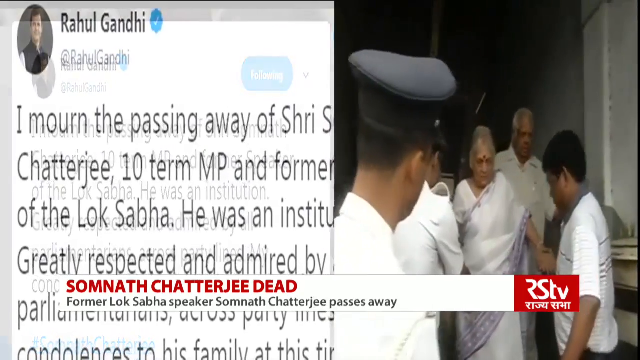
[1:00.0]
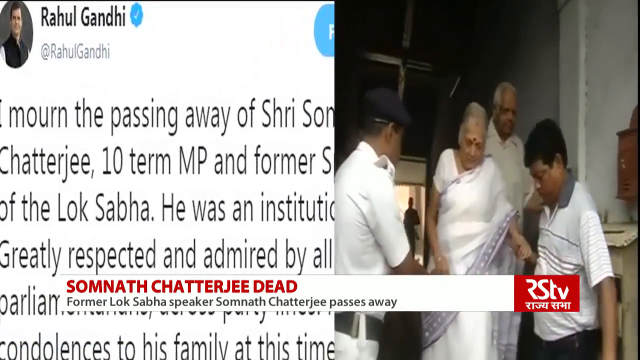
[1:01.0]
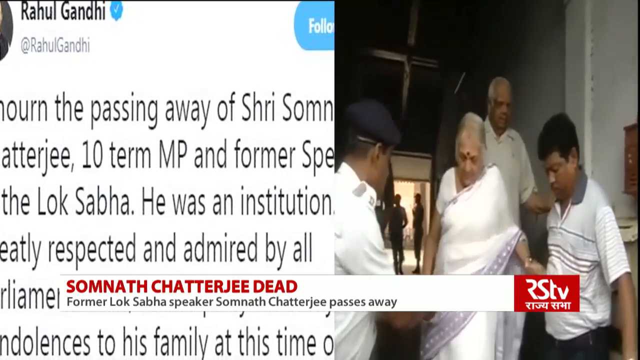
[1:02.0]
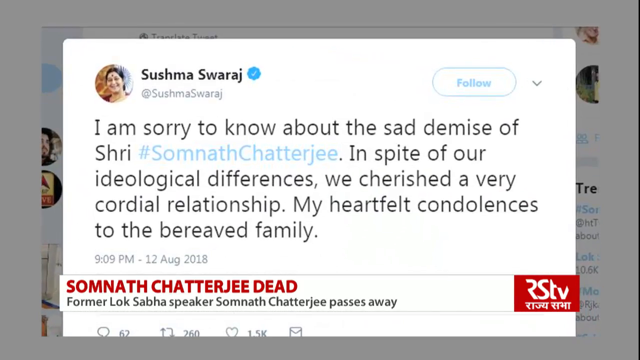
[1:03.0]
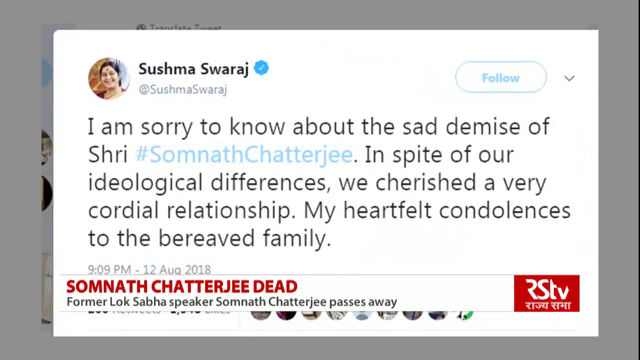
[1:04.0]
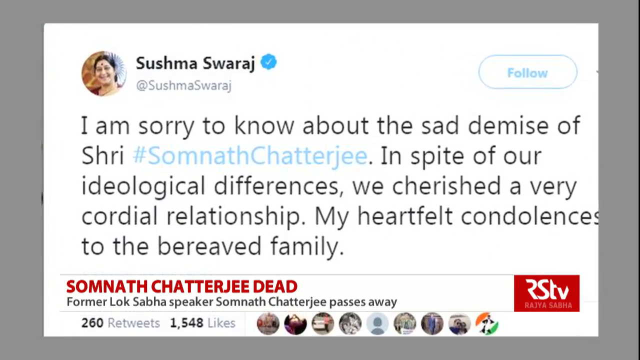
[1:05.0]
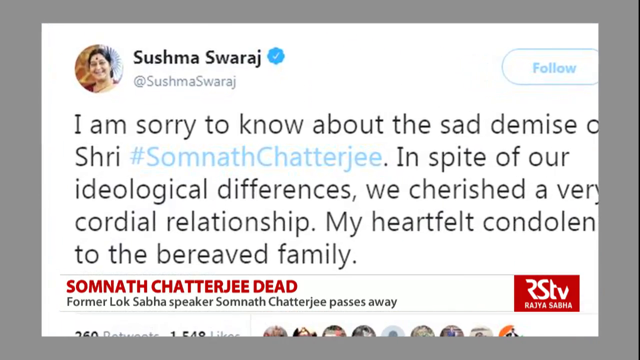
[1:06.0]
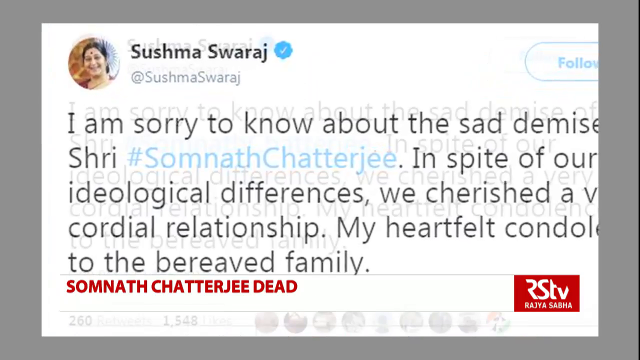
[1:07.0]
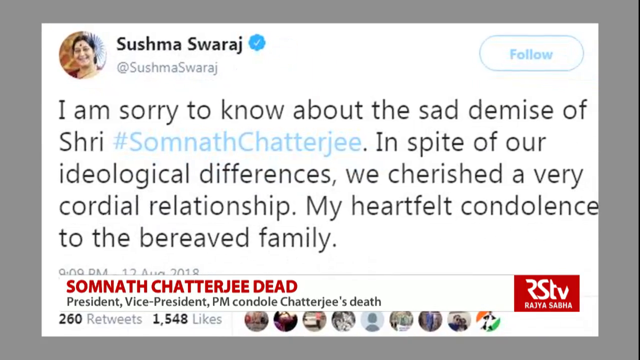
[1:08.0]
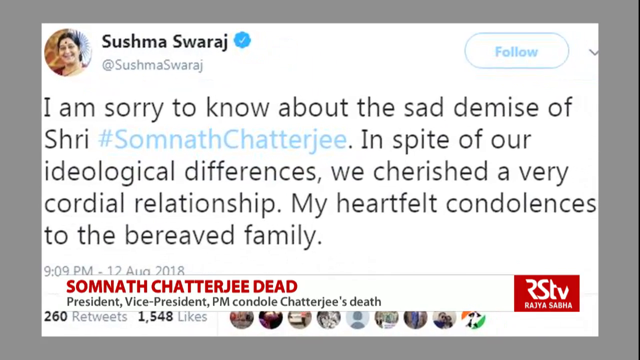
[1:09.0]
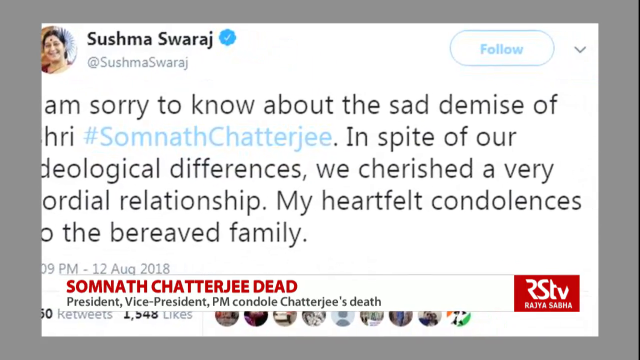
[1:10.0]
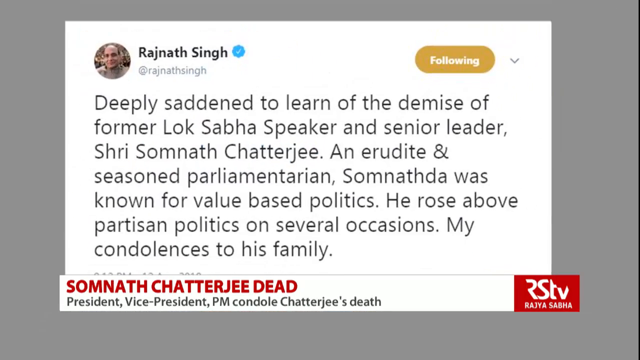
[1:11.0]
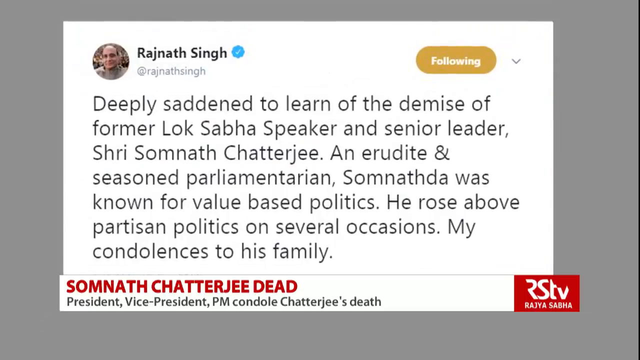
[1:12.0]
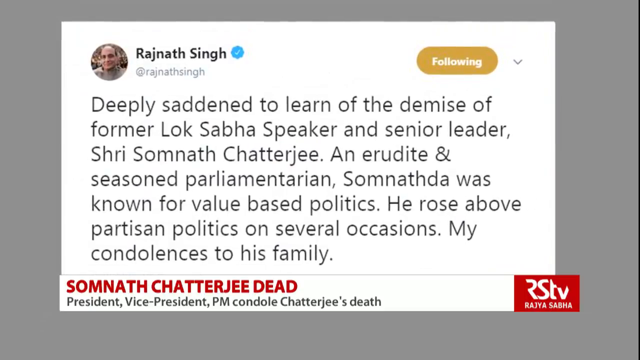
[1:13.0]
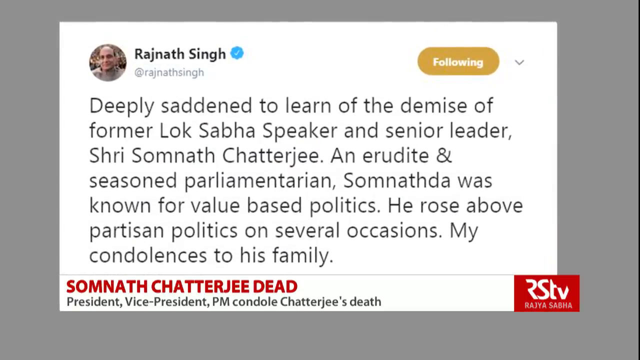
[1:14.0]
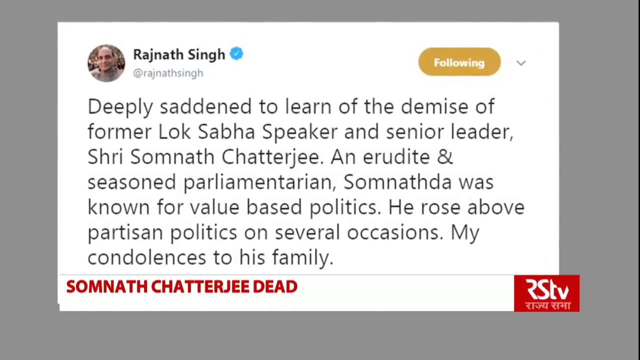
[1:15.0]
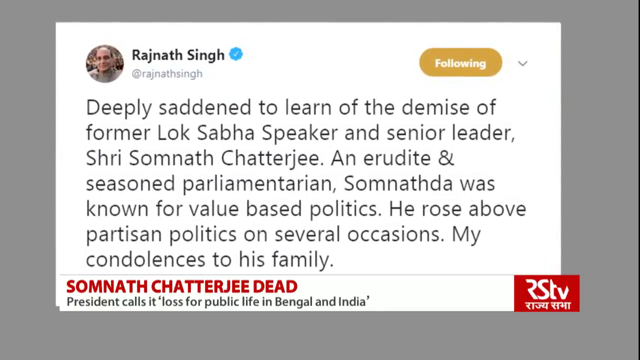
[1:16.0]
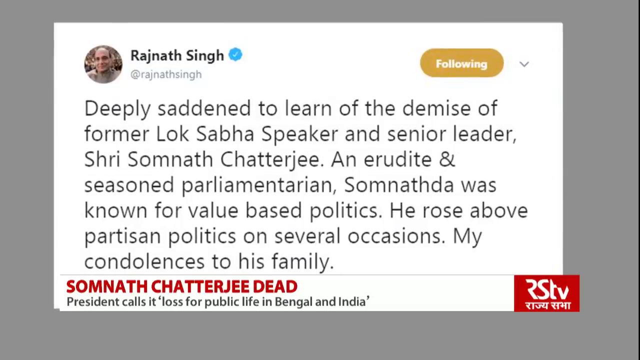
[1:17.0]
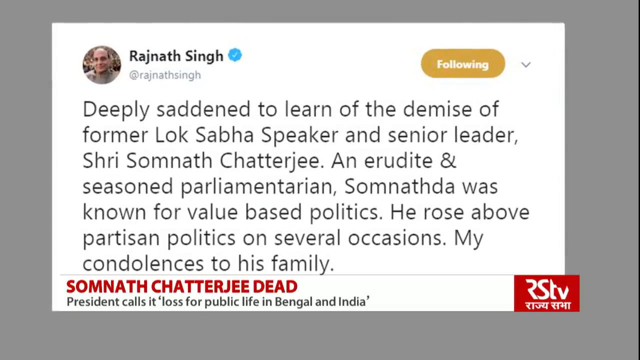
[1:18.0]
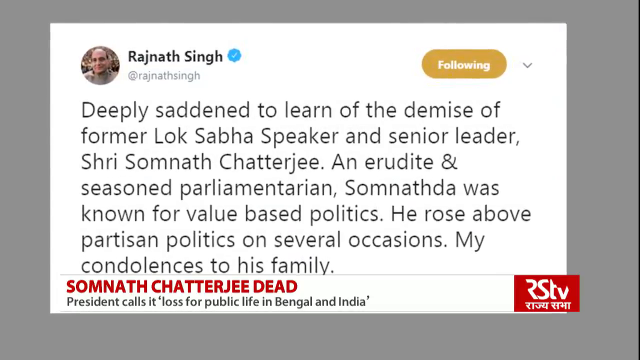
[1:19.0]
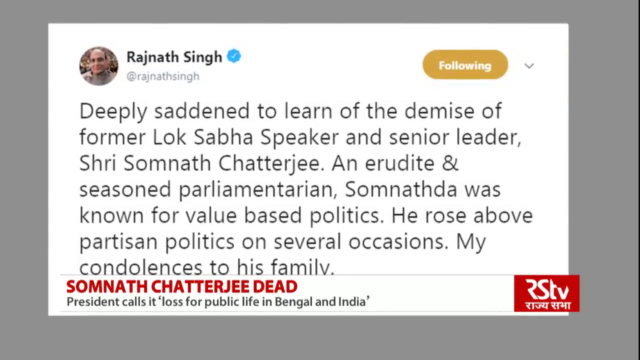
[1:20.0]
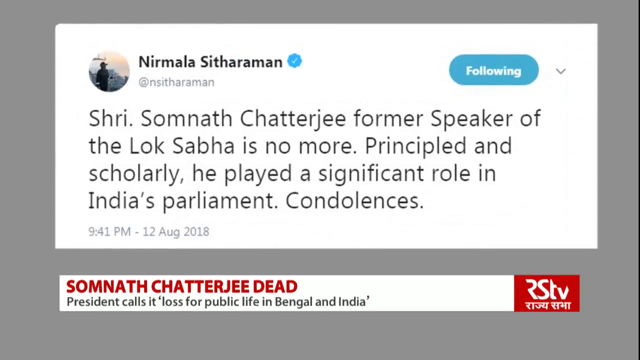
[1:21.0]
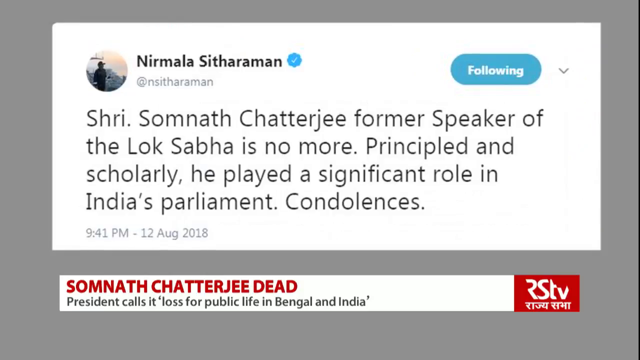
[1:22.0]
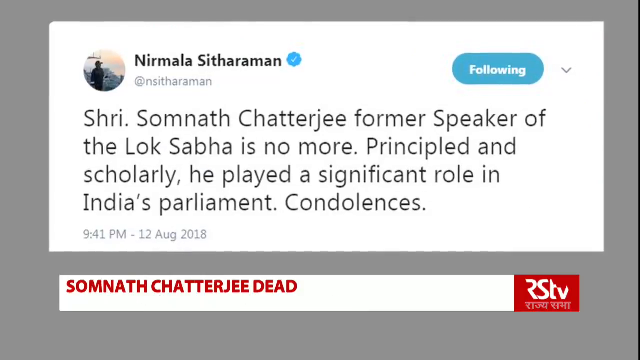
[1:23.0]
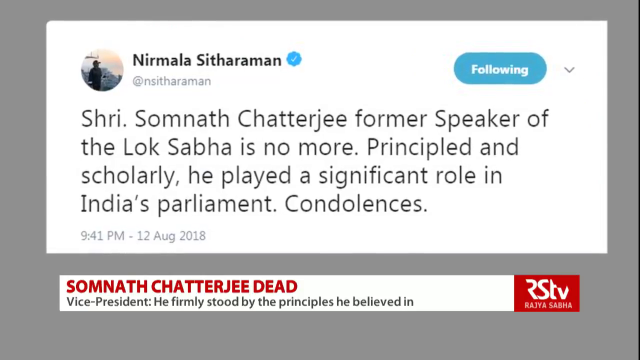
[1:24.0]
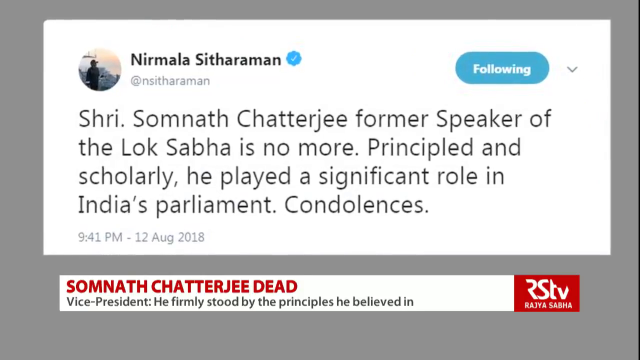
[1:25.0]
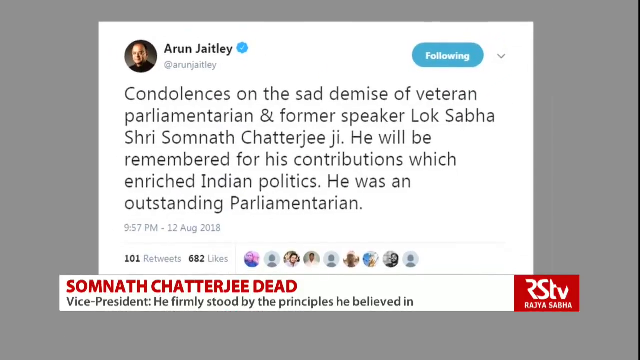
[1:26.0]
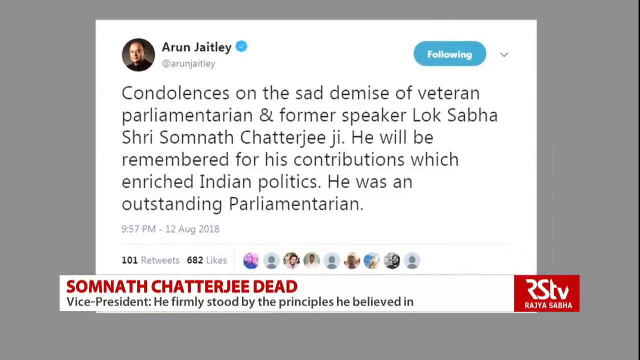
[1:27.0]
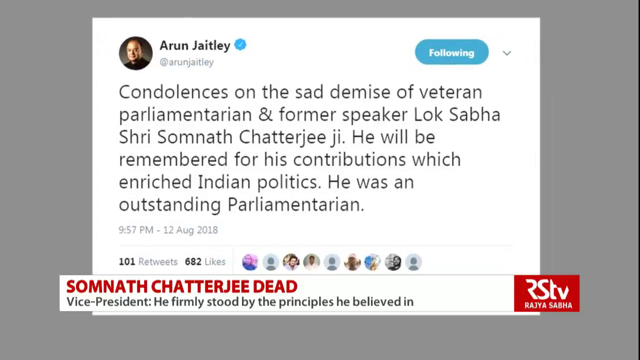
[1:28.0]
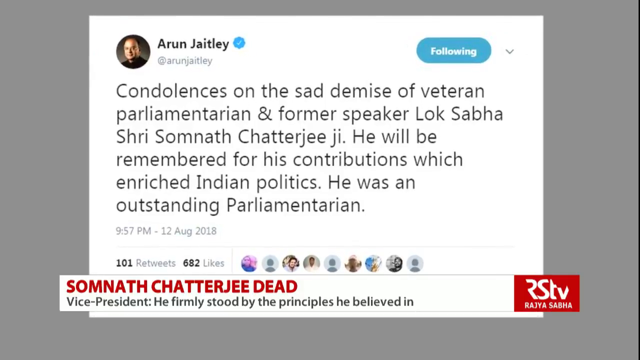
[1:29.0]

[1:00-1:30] Another tweet appears on the left side of the screen, made by Raul Gandhi; it begins "I mourn the passing of" and includes "10 term MP and former." The video then cuts to another tweet on the main portion of the screen, by Sushma Swaraj: "I am sorry to know about the sad demise of Shree. In spite of our ideological differences, we cherished a very cordial relationship. My heartfelt condolences to the bereaved family." The video focuses on this tweet, then changes to another tweet, by Rajnath Singh: "deeply saddened to learn of the demise of former Lok Sabha speaker and senior leader Shree Samnath Chatterjee, an erudite and seasoned parliamentarian. Samnath was known for value-based politics. He rose above partisan politics on several occasions. My condolences to his family." The bottom of the screen says "Samnath Chatterjee dead."